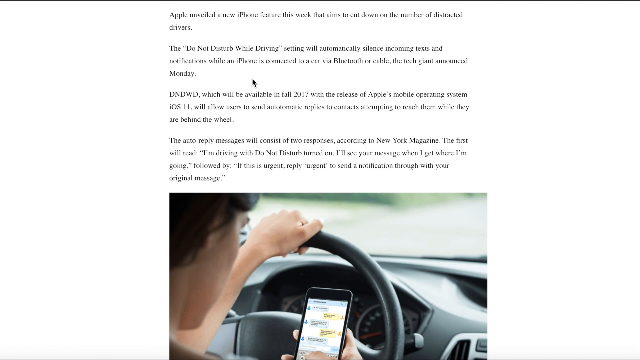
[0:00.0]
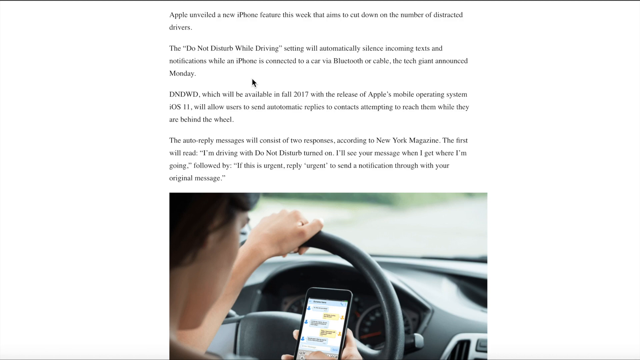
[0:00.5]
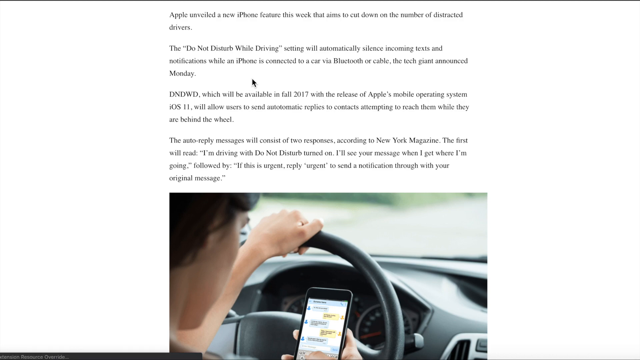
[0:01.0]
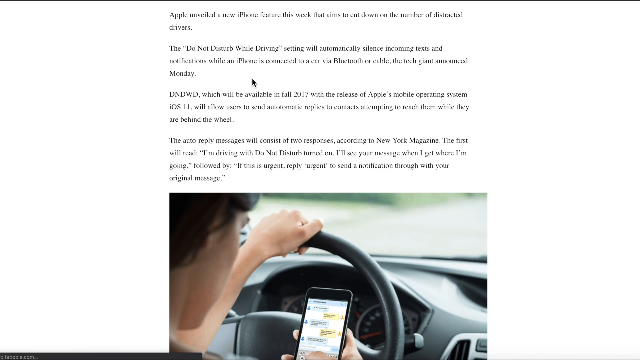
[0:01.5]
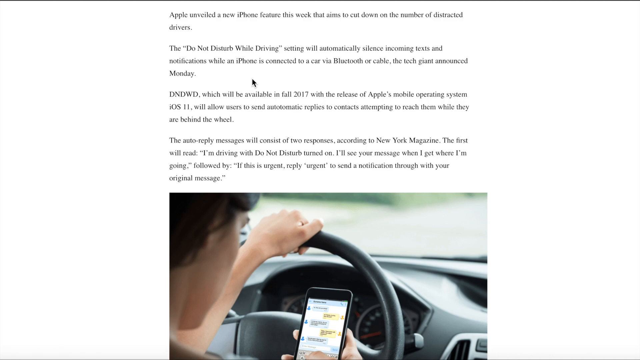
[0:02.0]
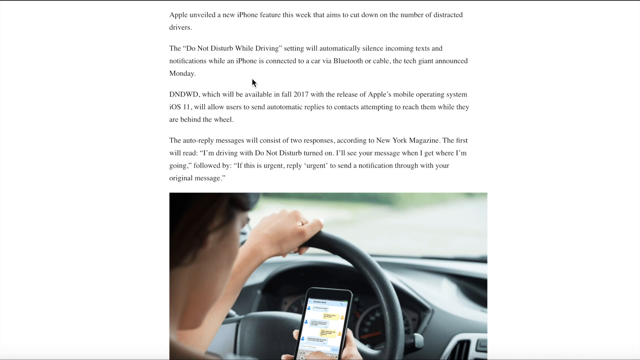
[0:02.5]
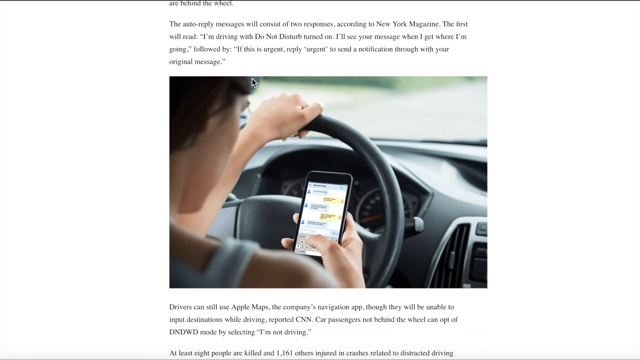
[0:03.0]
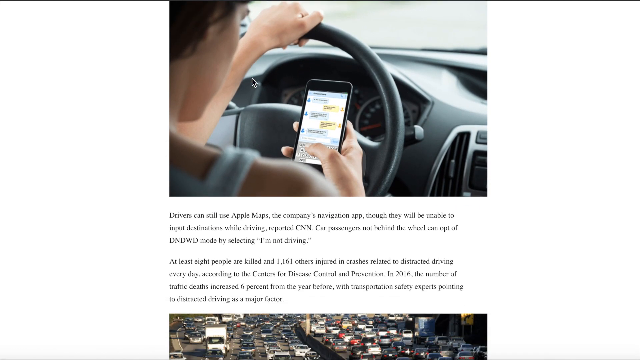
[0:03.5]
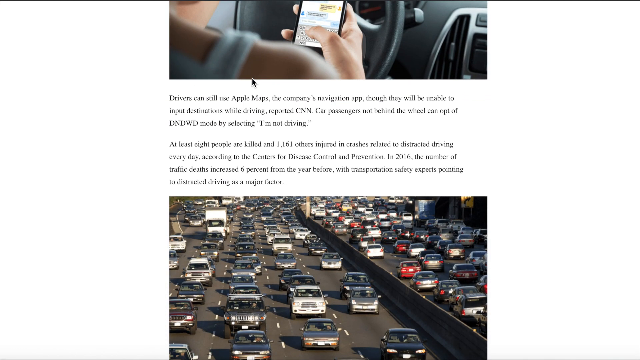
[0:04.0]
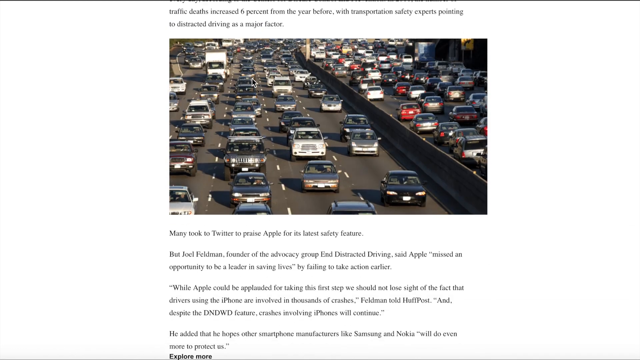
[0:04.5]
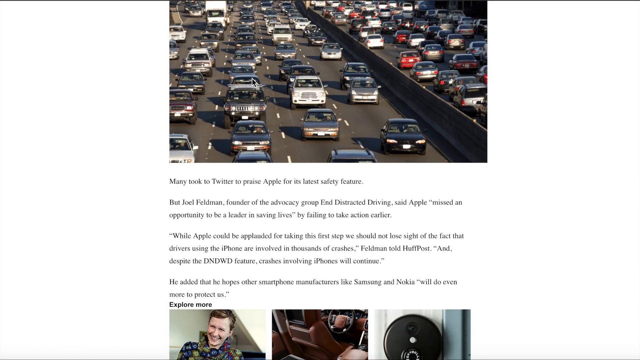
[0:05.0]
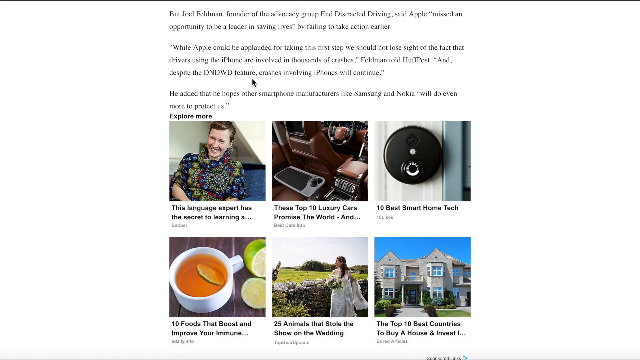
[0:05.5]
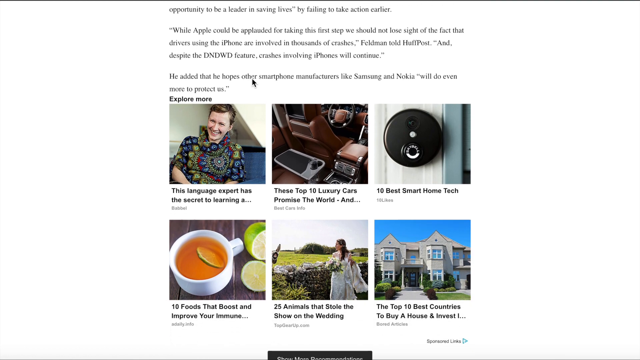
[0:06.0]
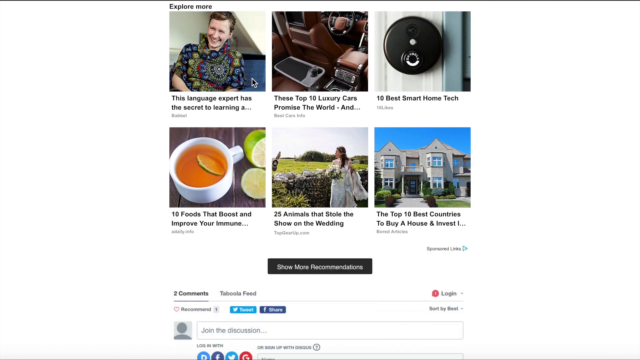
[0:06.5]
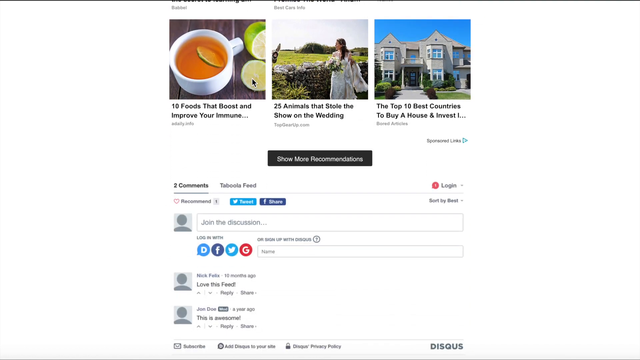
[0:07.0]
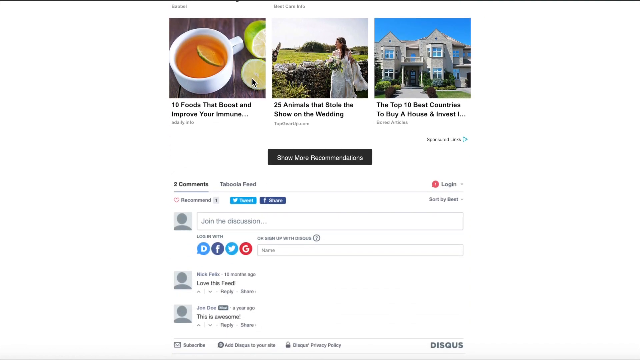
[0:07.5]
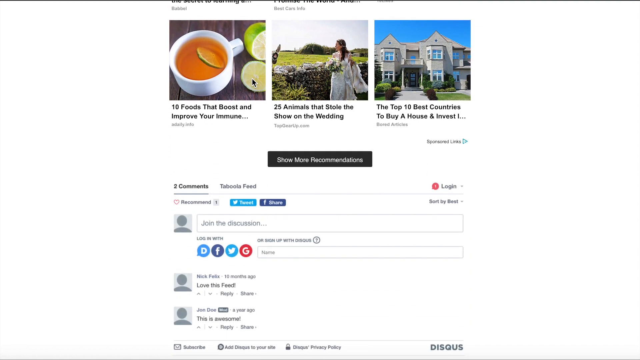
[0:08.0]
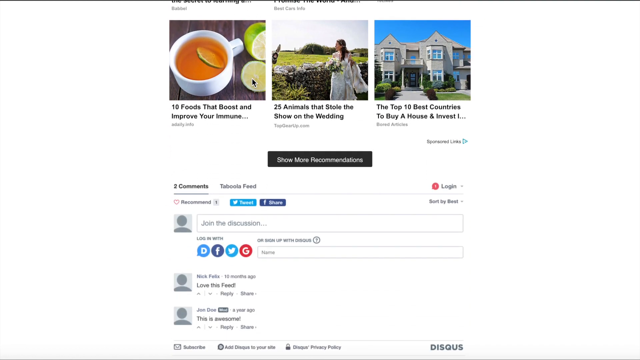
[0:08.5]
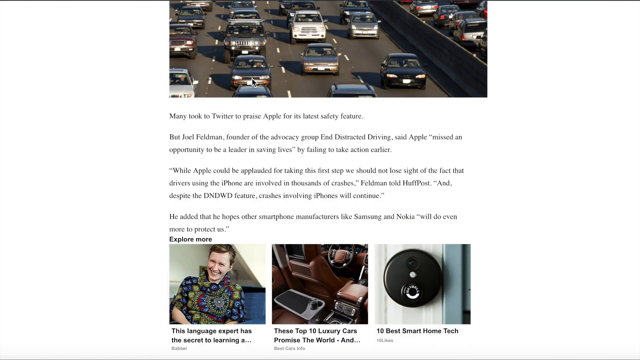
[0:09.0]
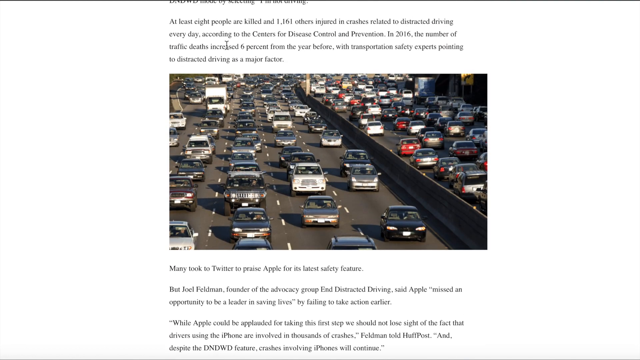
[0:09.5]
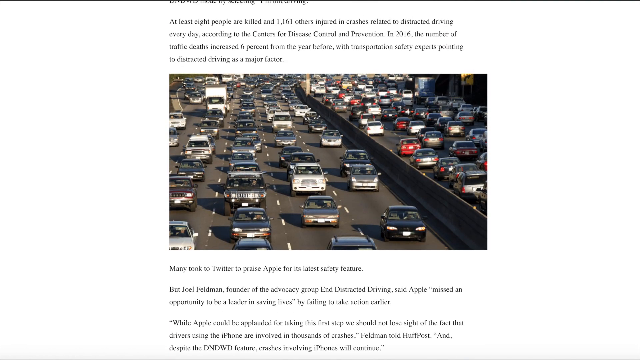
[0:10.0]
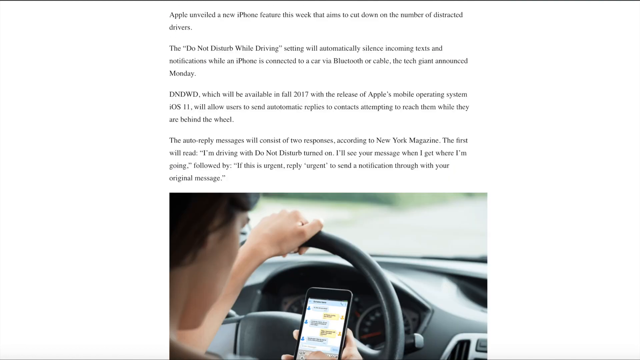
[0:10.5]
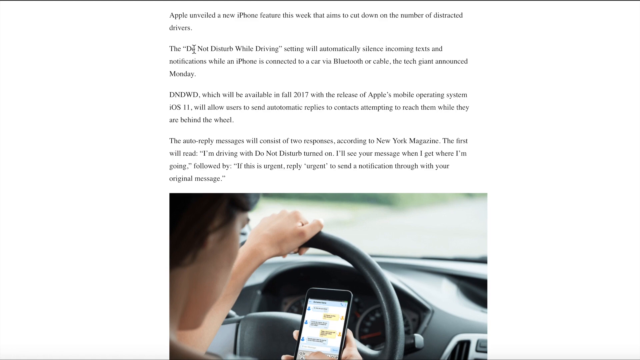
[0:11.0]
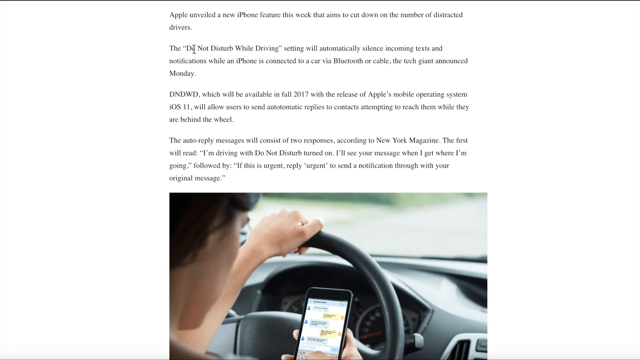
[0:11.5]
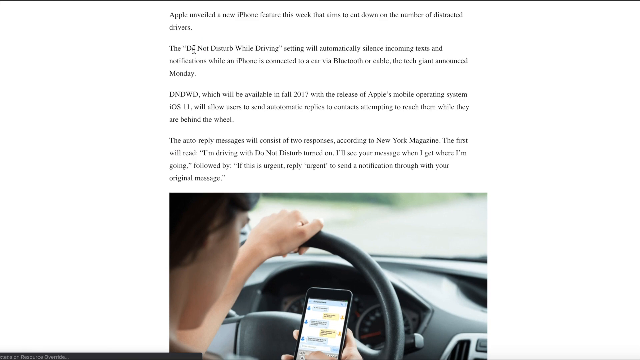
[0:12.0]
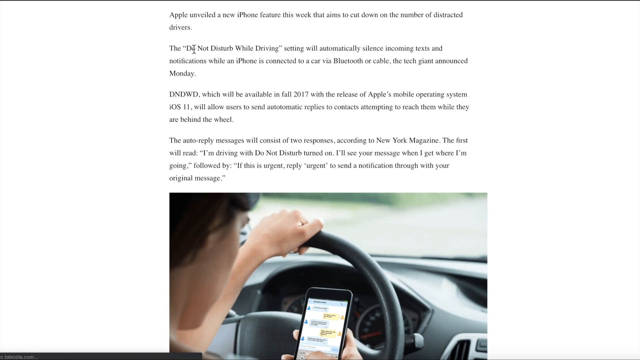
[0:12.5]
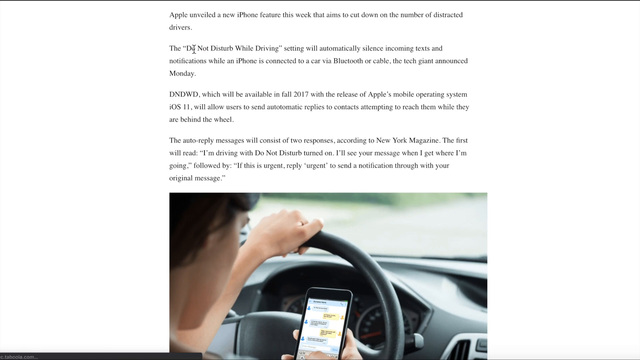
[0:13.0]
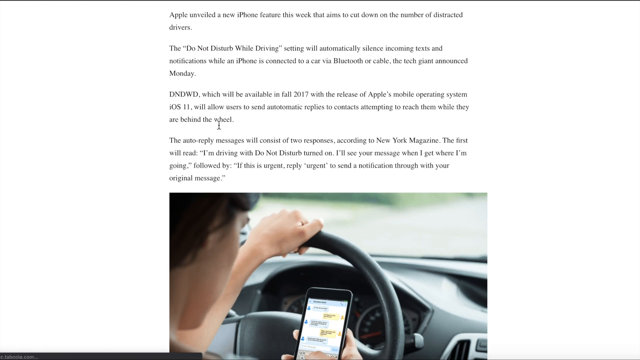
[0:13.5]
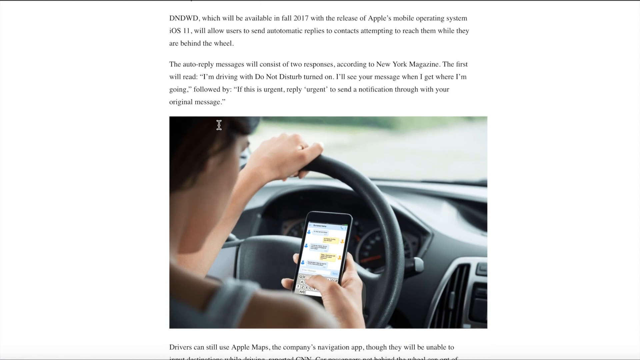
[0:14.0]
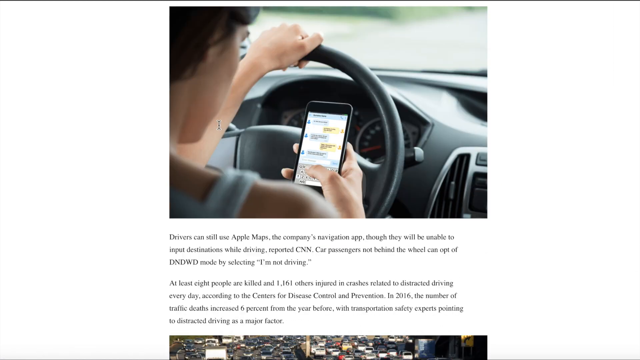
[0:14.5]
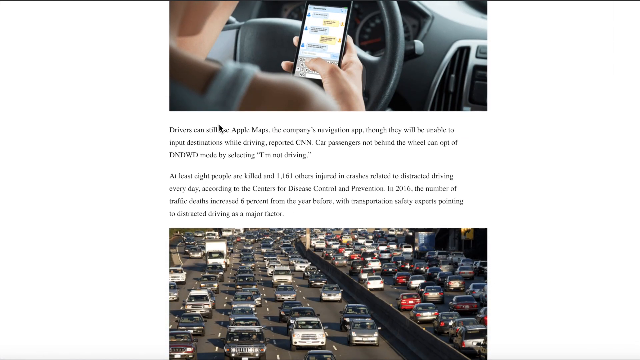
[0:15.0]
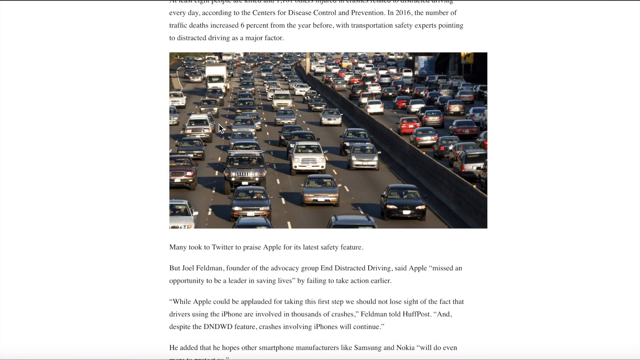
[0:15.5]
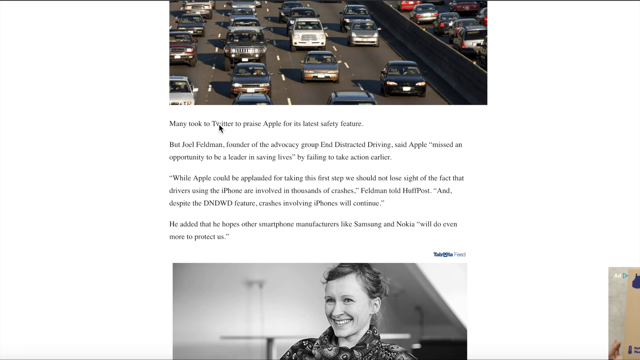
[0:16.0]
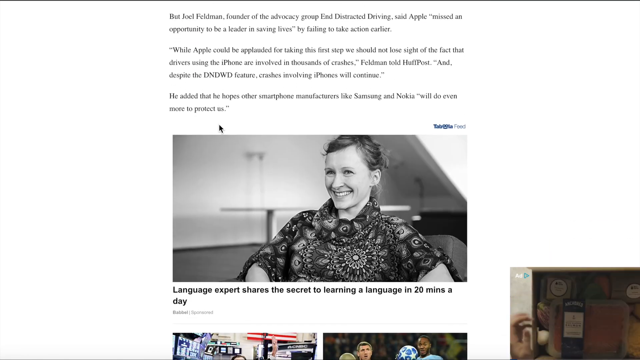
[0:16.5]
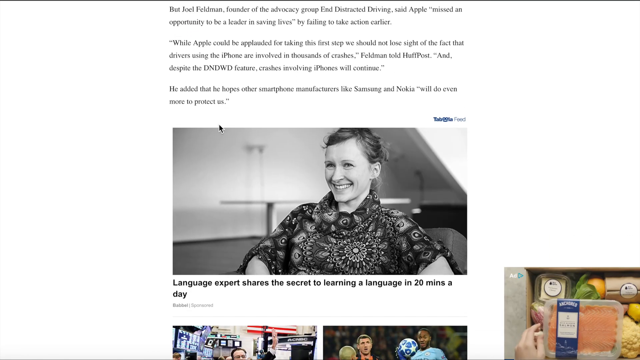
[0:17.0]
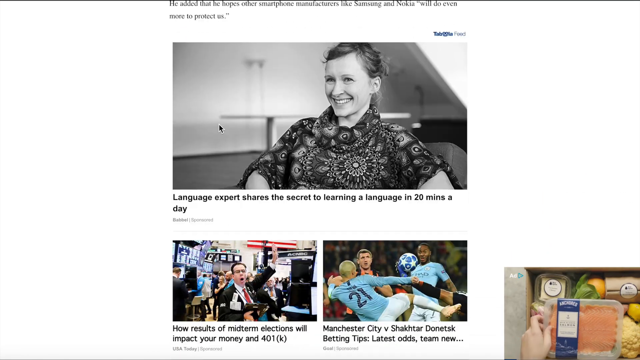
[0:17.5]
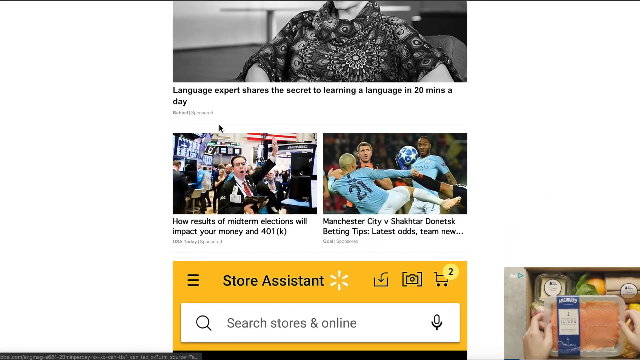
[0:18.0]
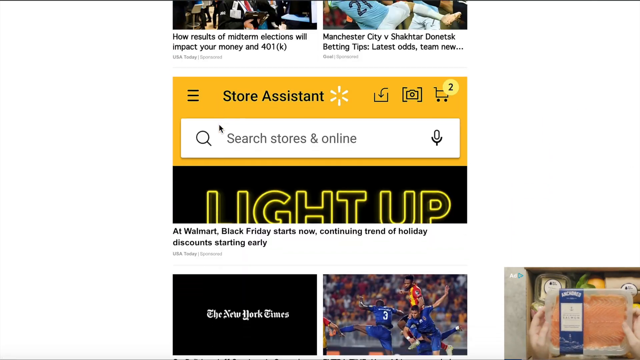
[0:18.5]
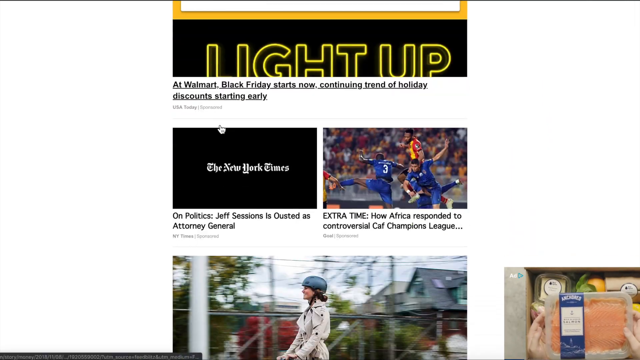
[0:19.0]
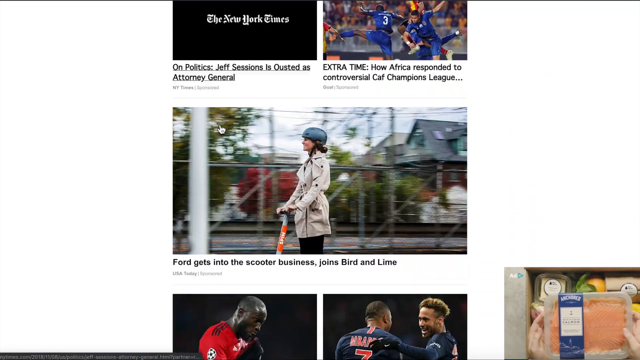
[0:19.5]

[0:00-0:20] The video shows a text article at the top with a graphic image at the bottom. The image appears to show a person inside a car driving with the left hand while the right hand holds an iPhone; the person is clearly distracted by the phone while driving. The text at the top reads: "Apple unveiled a new iPhone feature this week that aims to cut down on the number of distracted drivers. The do not disturb while driving setting will automatically silence incoming texts and notifications while an iPhone is connected to a car via Bluetooth or cable. The tech giant announced Monday DND WD which will be available in fall 2017 with the release of Apple's mobile operating system iOS 11 will allow users to send automatic replies to contacts attempting to reach them while they are behind the wheel. The auto reply messages will consist of two responses according to New York Magazine. The first will read I am driving with do not disturb turned on I'll see your message when I get where I'm going followed by if this is urgent reply urgent to send a notification through with your original message." The page then scrolls down to more details of the article.